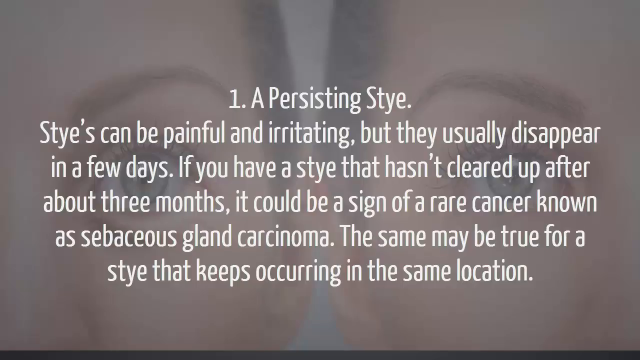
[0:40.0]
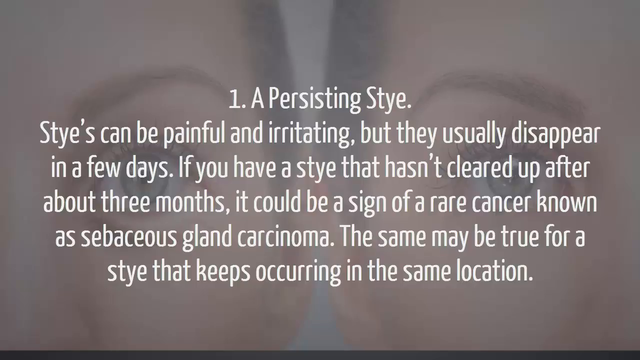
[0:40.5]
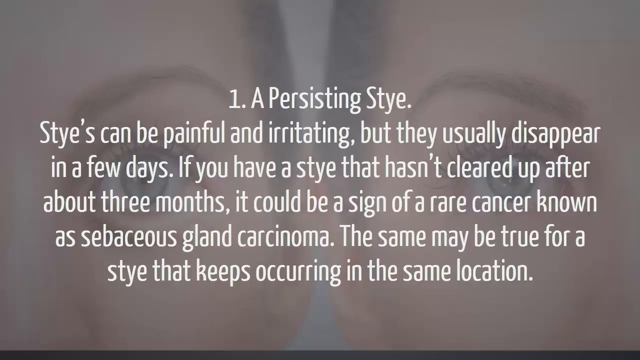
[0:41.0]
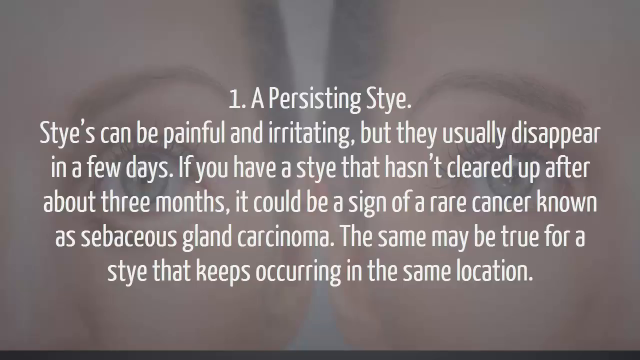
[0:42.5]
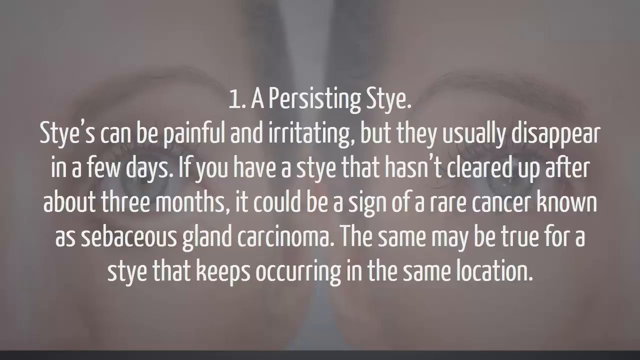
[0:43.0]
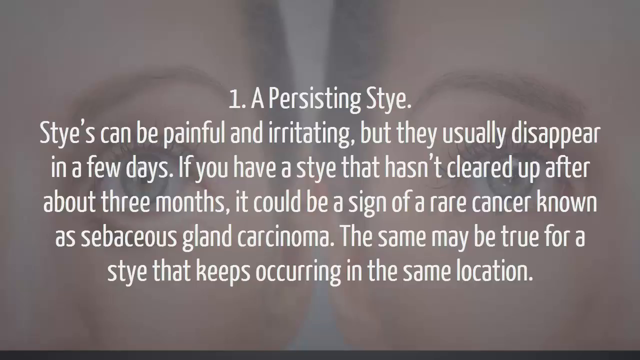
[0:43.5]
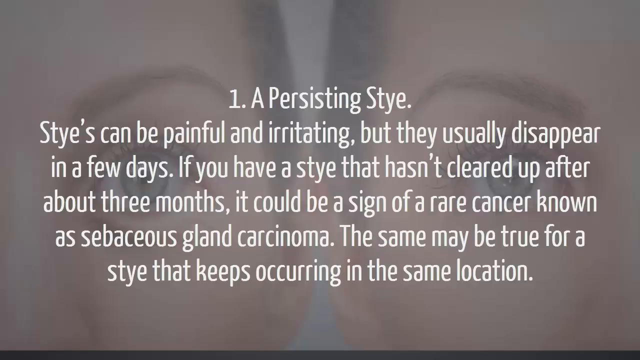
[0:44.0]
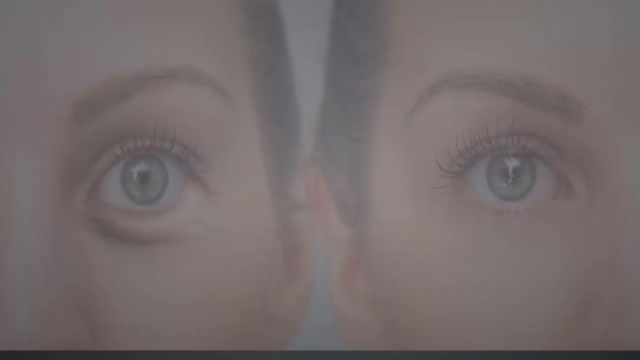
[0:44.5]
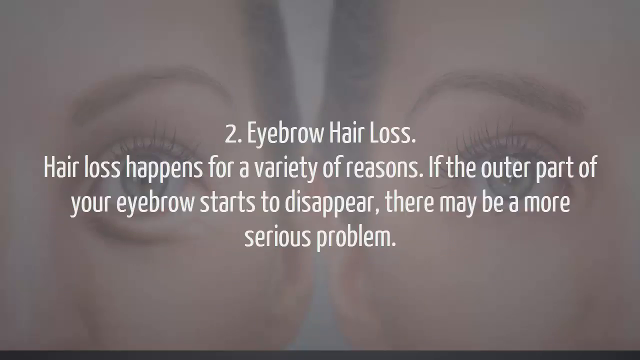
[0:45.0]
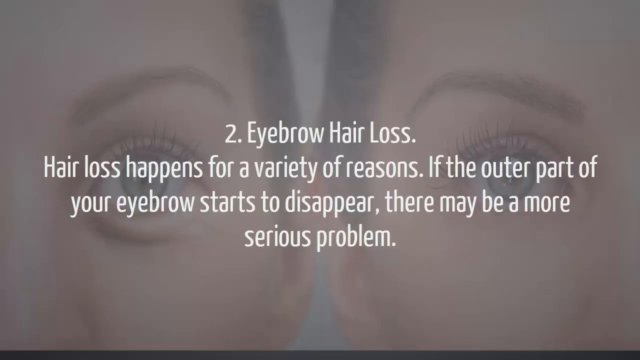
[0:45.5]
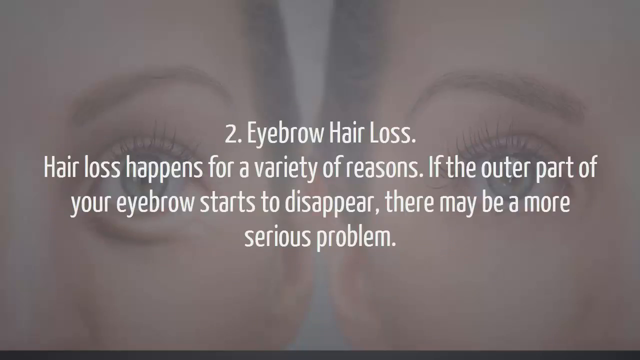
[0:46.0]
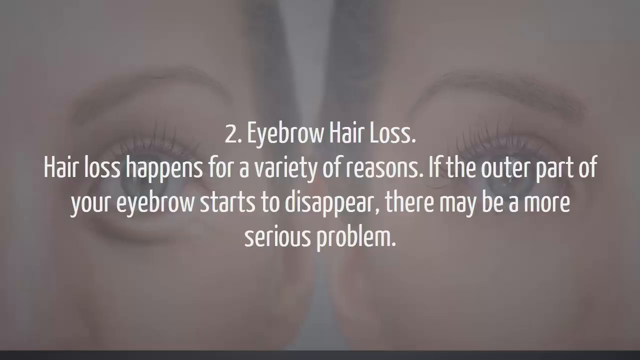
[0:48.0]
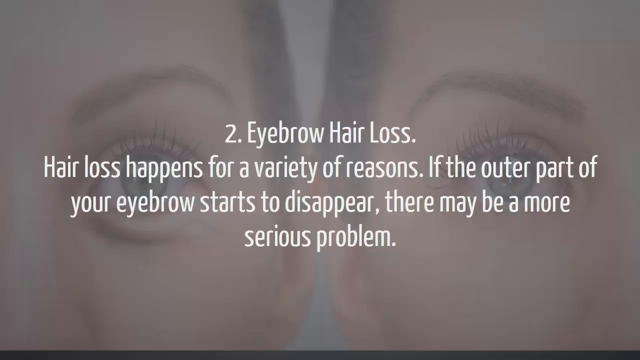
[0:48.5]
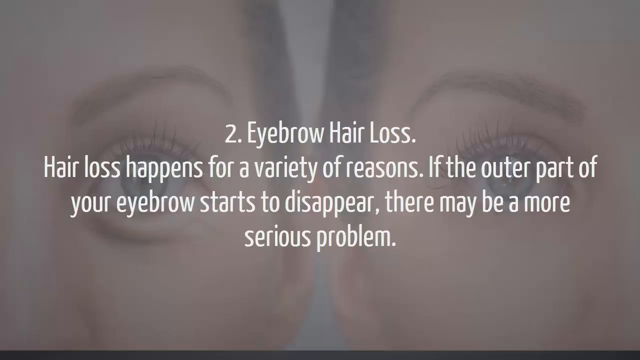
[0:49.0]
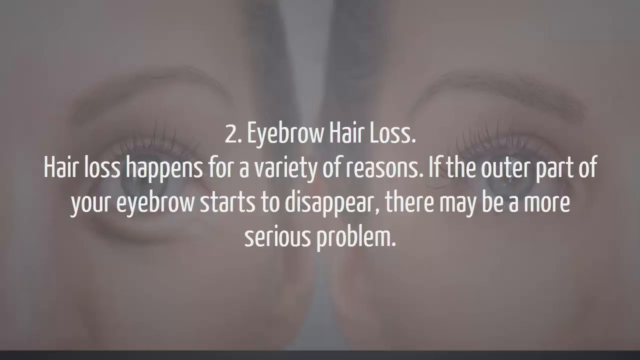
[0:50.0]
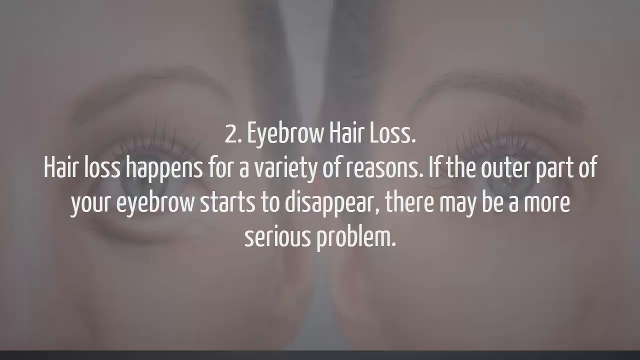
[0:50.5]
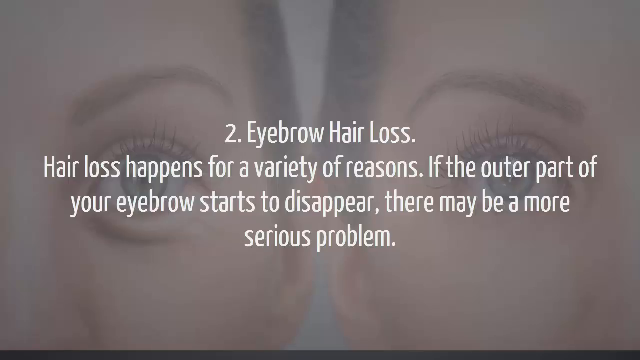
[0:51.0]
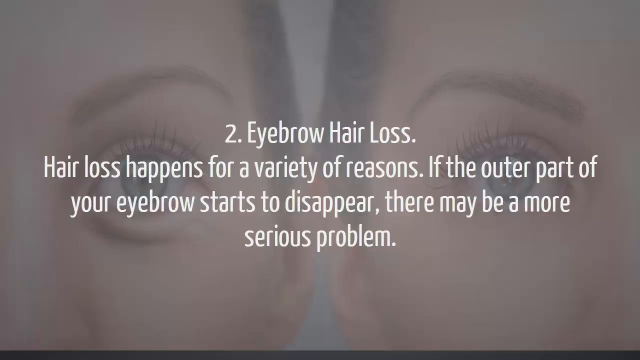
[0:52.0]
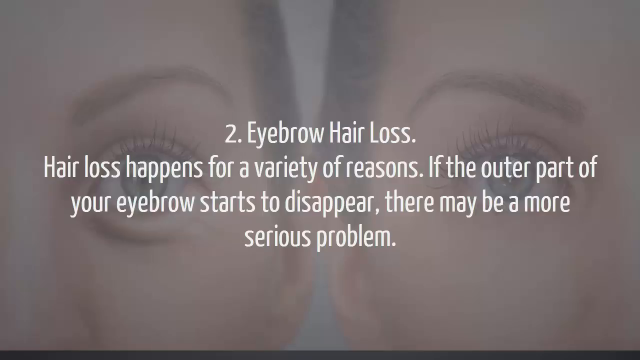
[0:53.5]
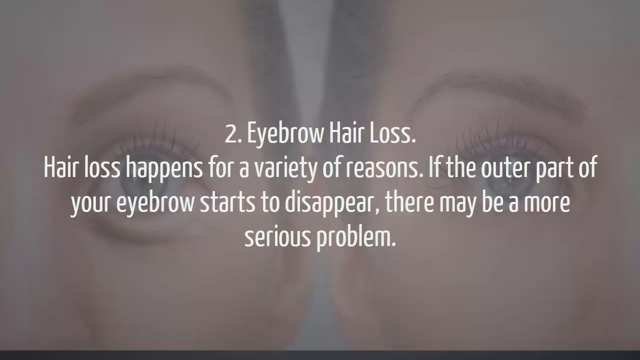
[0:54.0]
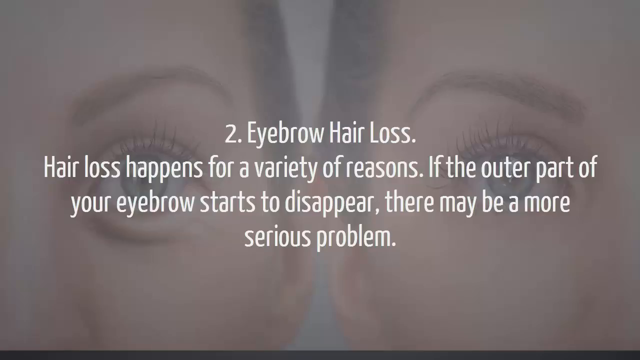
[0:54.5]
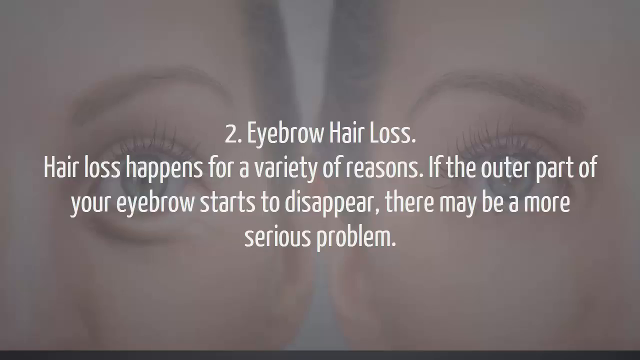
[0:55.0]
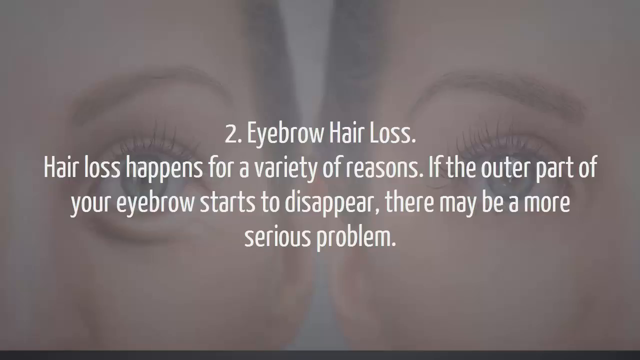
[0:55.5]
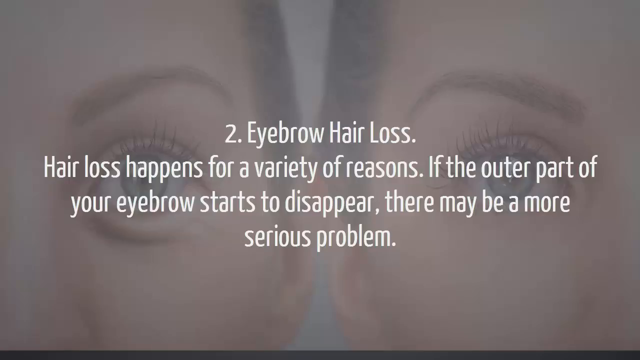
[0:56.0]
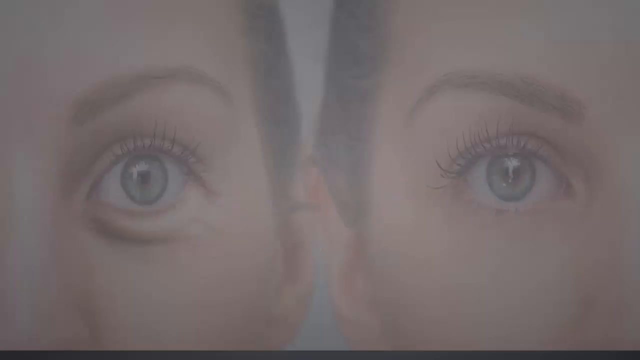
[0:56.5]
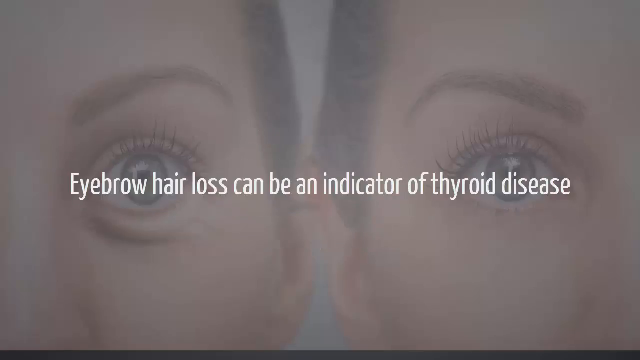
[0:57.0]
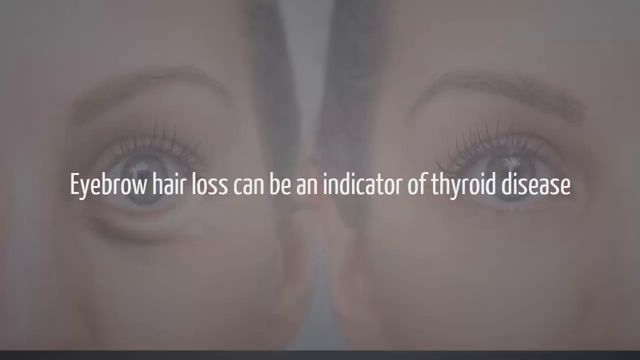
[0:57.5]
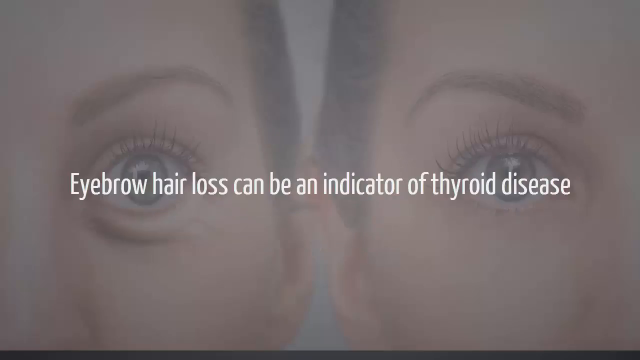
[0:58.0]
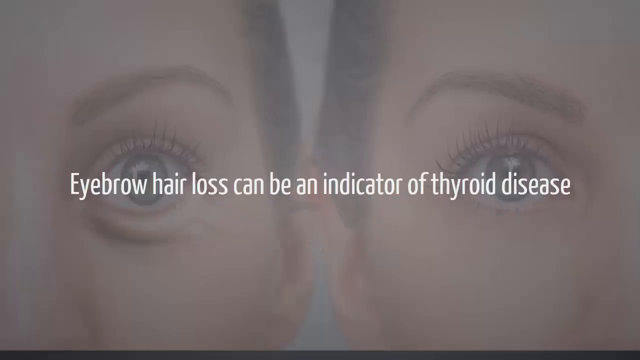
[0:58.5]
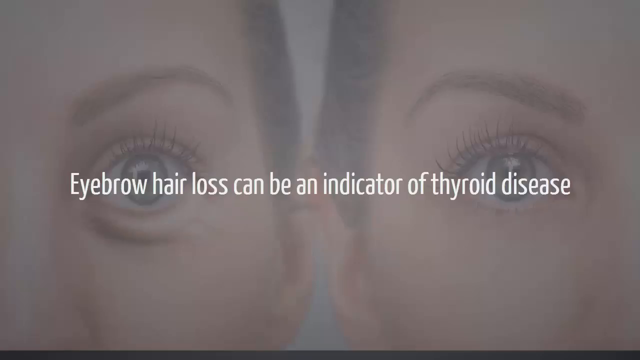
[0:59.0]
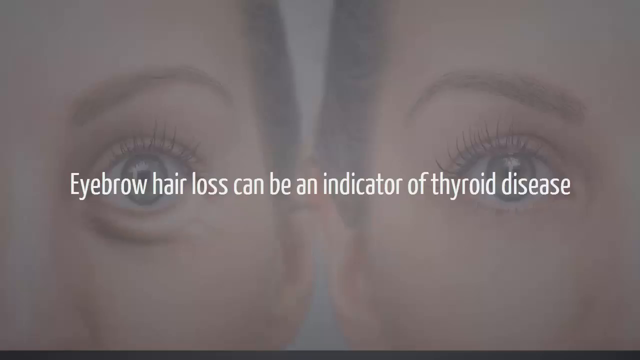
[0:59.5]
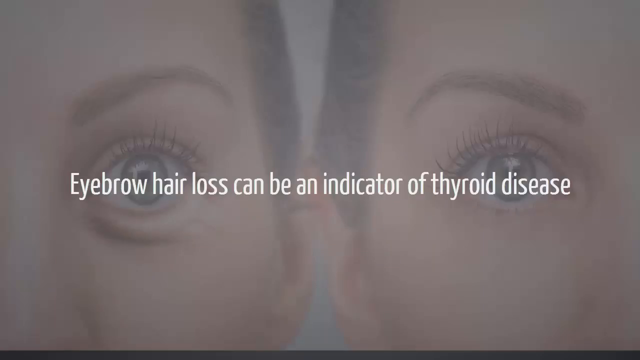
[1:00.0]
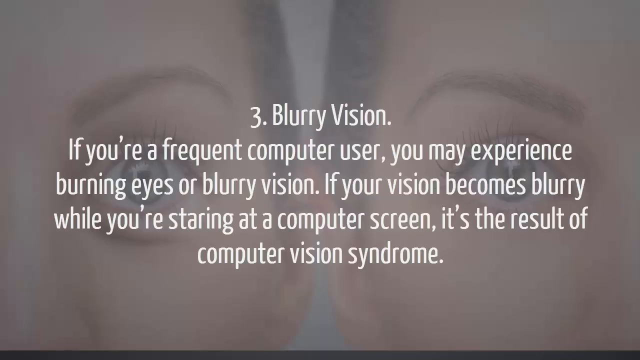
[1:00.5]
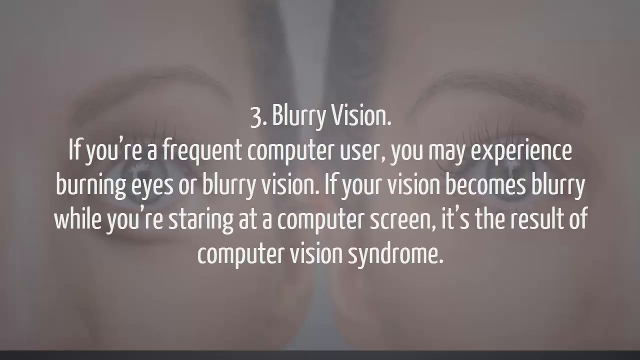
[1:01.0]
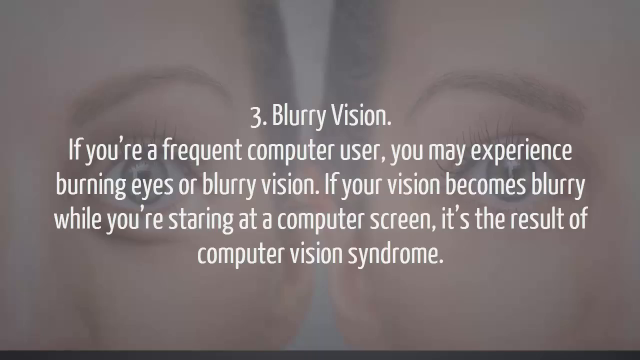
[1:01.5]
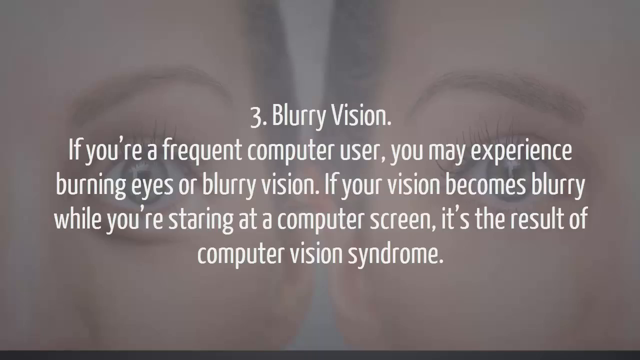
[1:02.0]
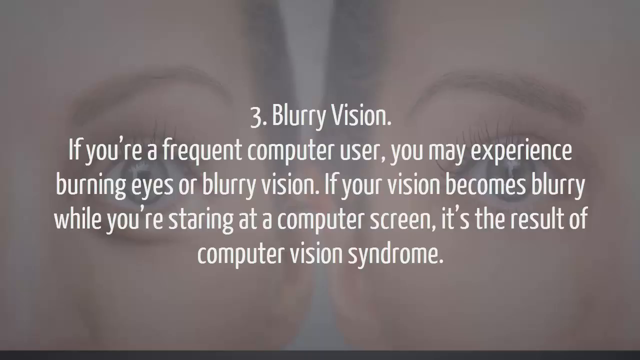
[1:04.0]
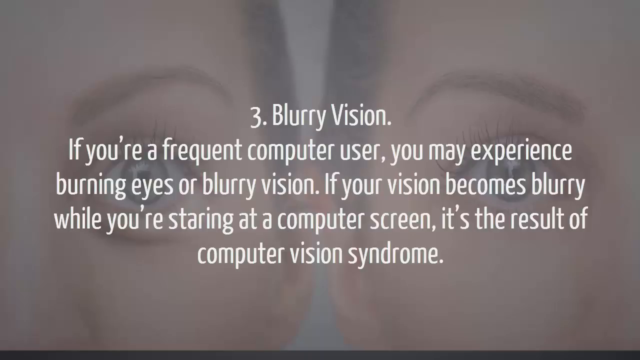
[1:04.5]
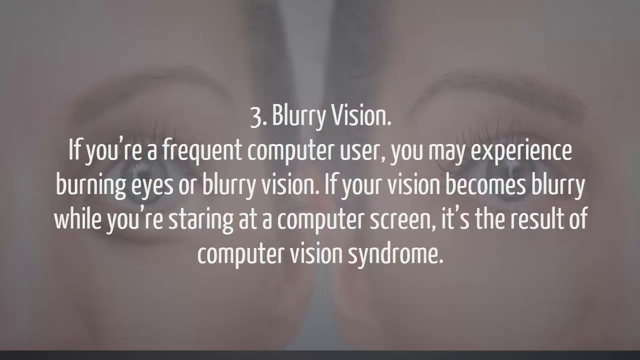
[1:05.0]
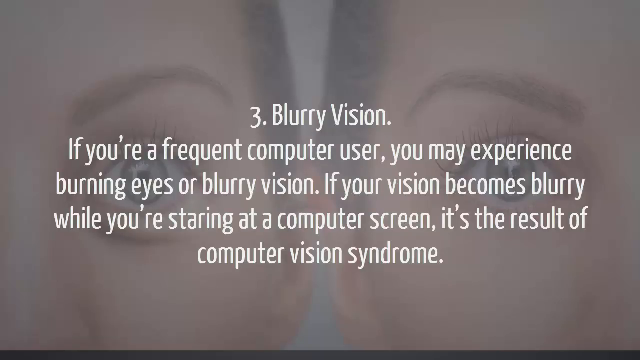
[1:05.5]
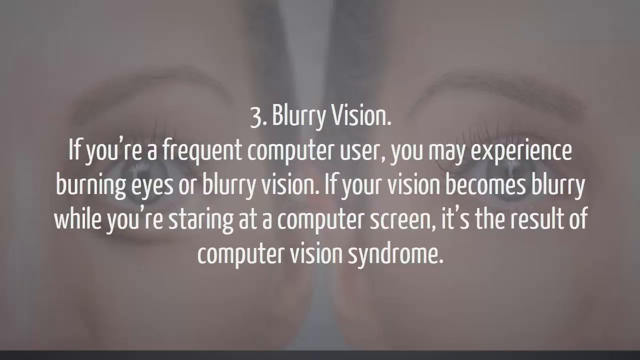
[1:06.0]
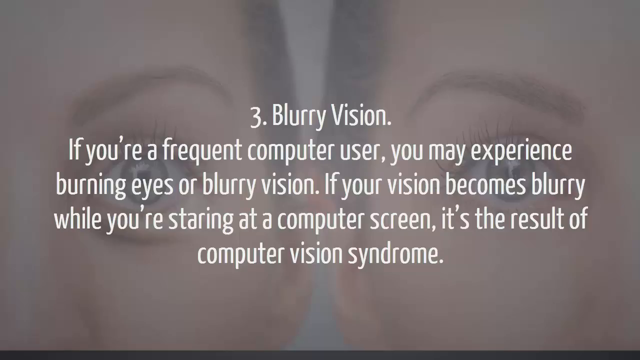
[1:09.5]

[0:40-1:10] Text appears on the screen over a background image of two human faces, with only half of each face showing, from the nose over to the ear. They are women, and they appear to be looking directly at the camera, so the eye is the most highlighted feature of each face. The text reads: "One, a persisting stye. Styes can be painful and irritating, but they usually disappear in a few days. If you have a stye that hasn't cleared up after about three months, it could be a sign of a rare cancer known as sebaceous gland carcinoma. The same may be true for a stye that keeps occurring in the same location."